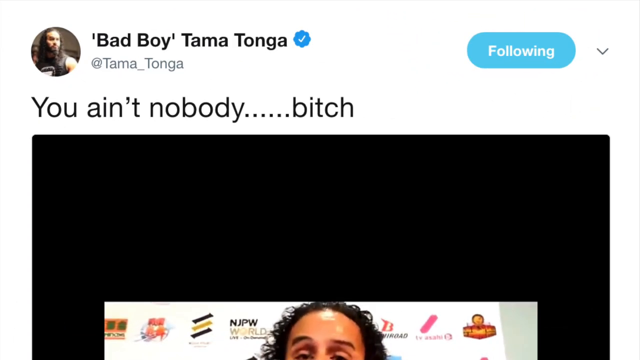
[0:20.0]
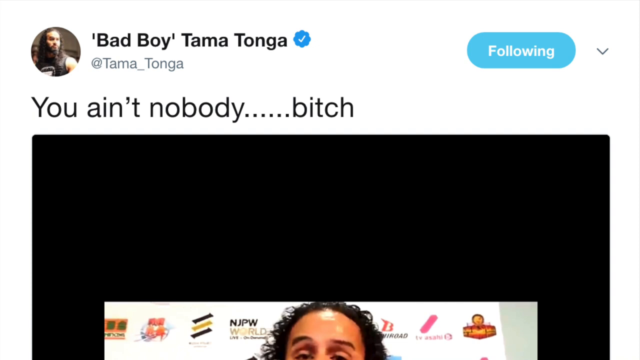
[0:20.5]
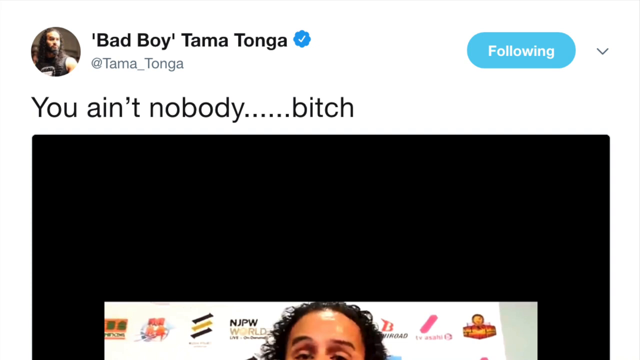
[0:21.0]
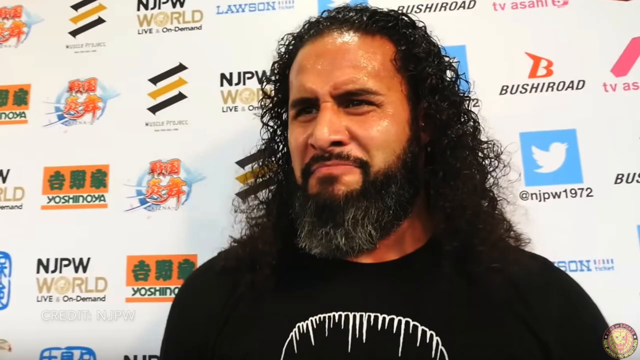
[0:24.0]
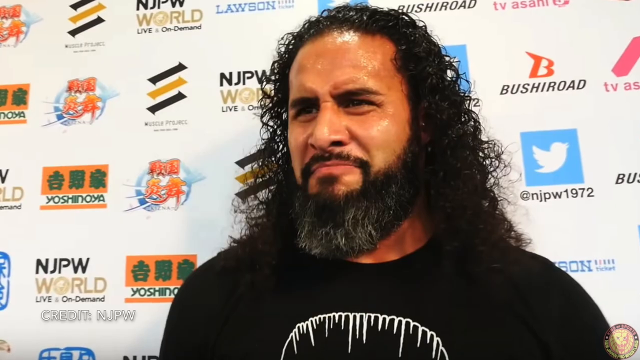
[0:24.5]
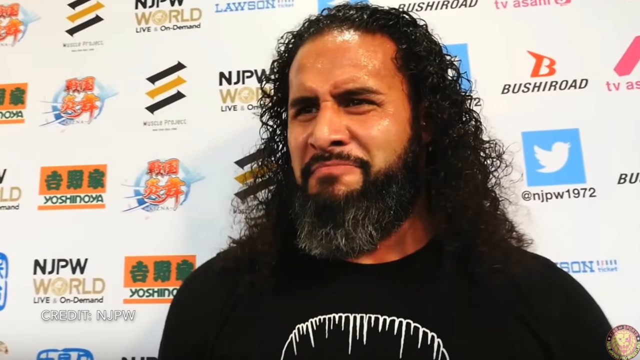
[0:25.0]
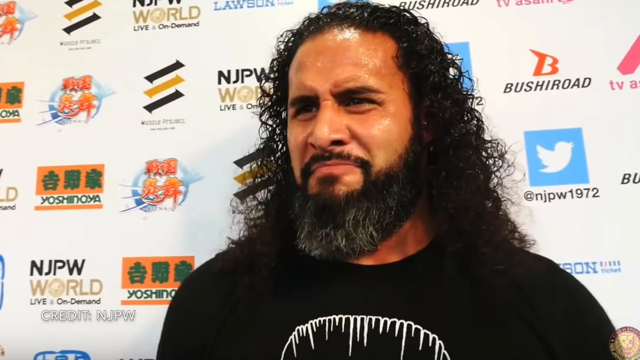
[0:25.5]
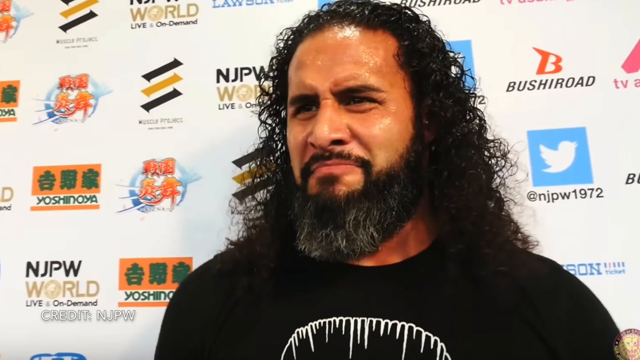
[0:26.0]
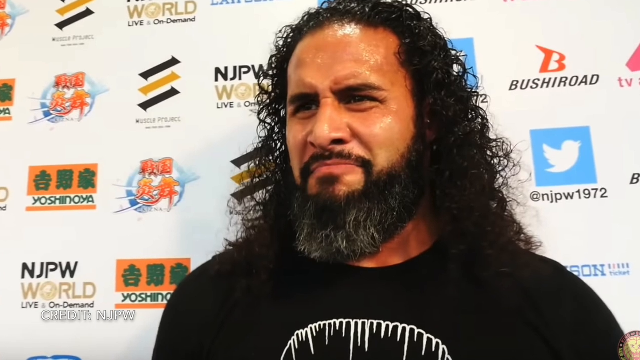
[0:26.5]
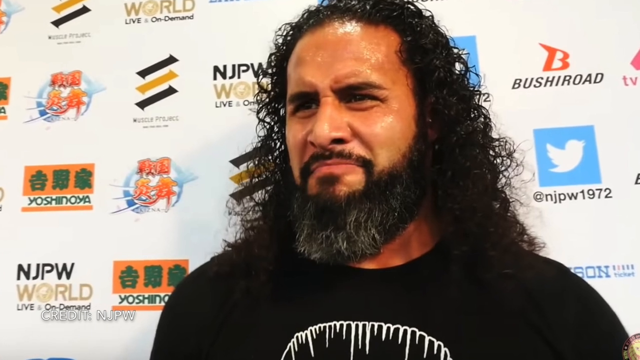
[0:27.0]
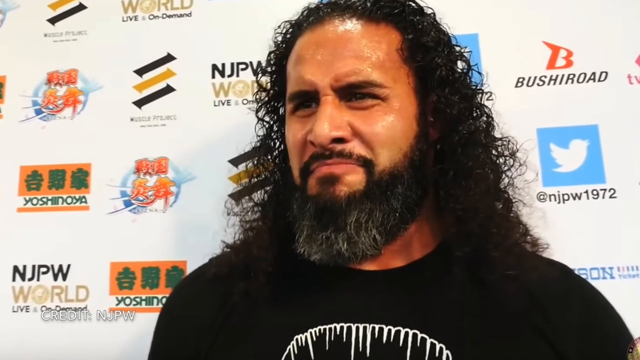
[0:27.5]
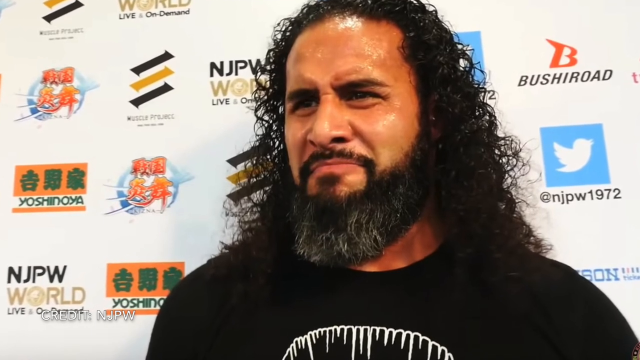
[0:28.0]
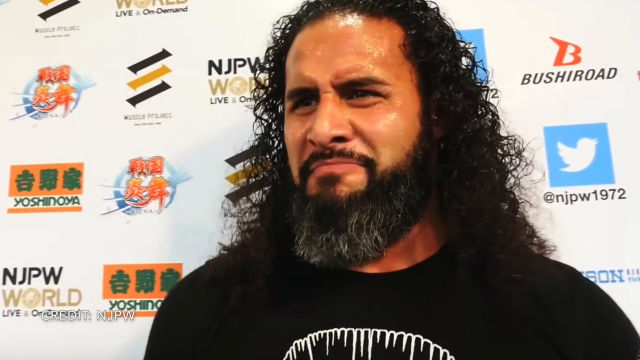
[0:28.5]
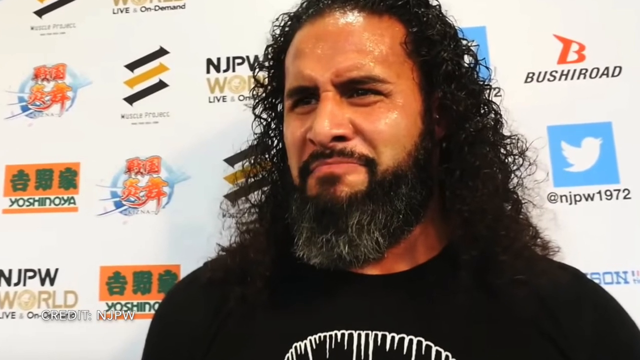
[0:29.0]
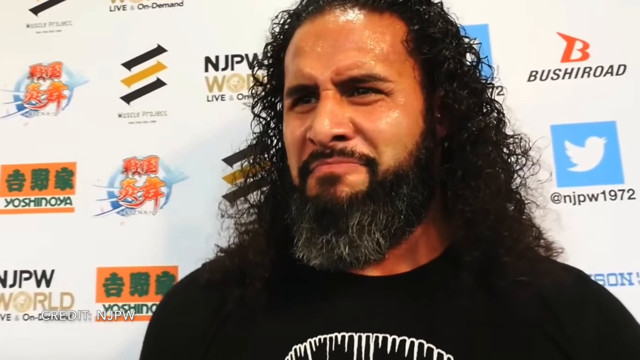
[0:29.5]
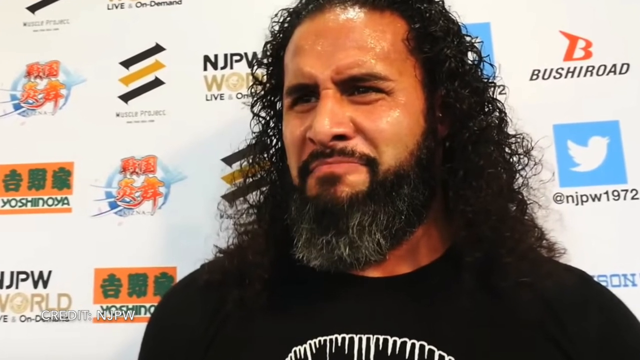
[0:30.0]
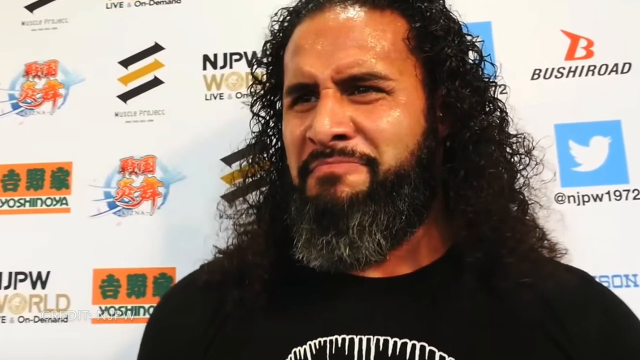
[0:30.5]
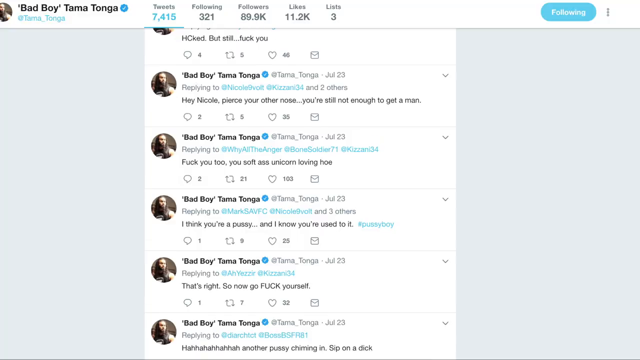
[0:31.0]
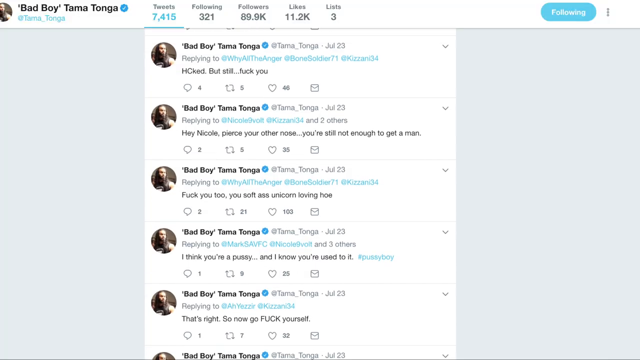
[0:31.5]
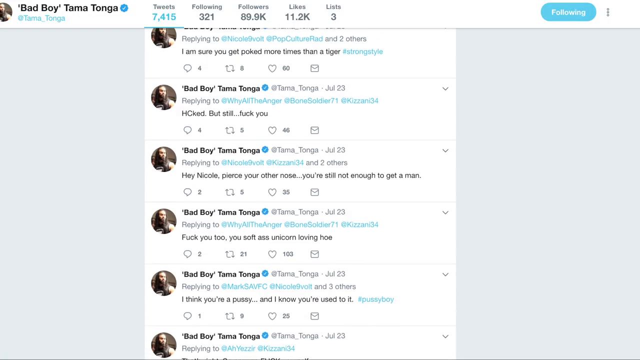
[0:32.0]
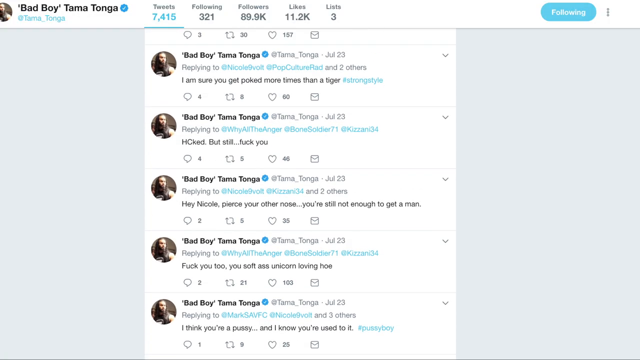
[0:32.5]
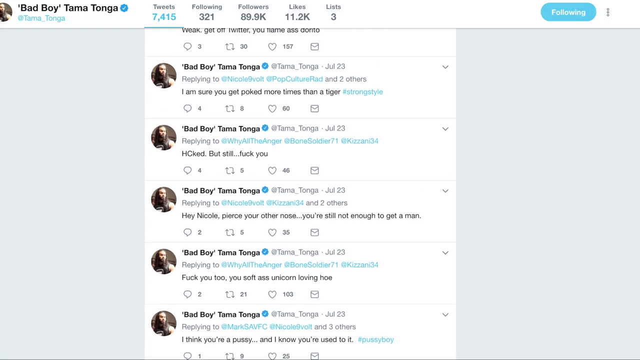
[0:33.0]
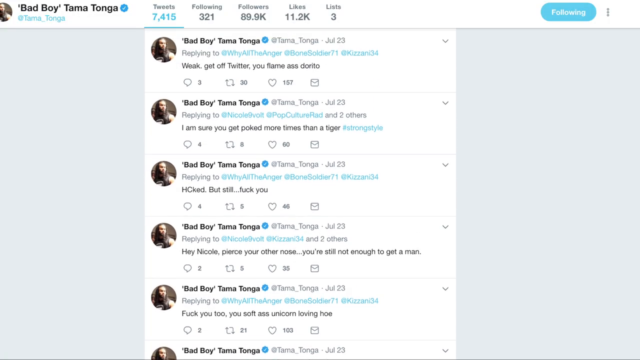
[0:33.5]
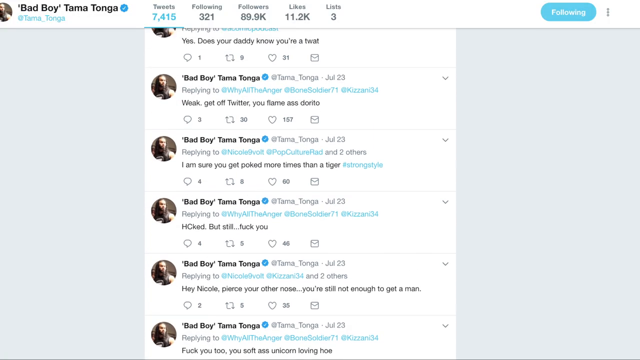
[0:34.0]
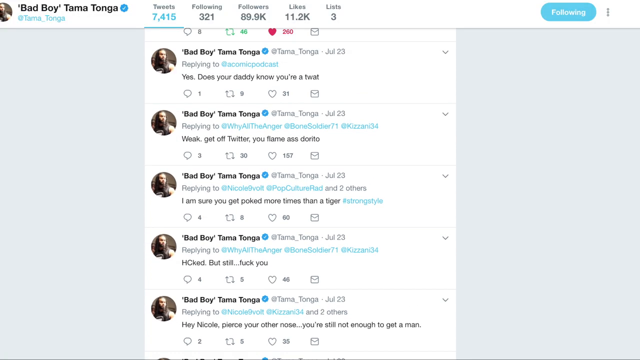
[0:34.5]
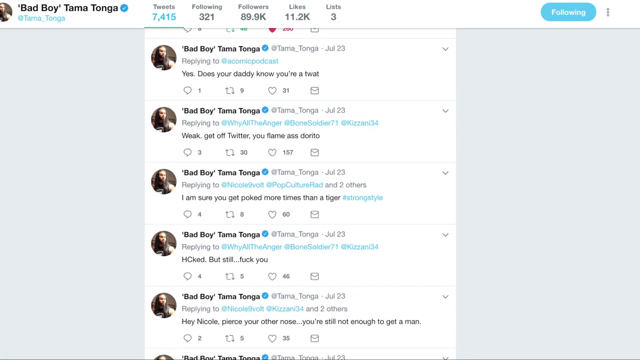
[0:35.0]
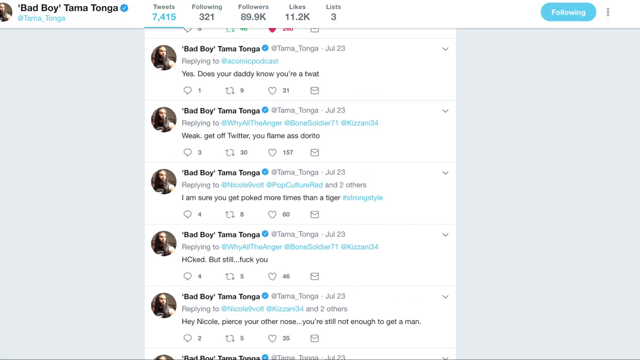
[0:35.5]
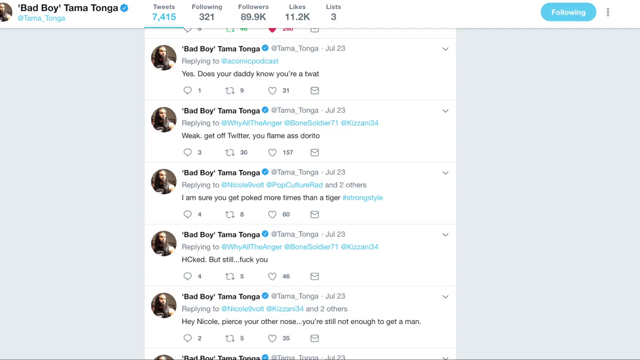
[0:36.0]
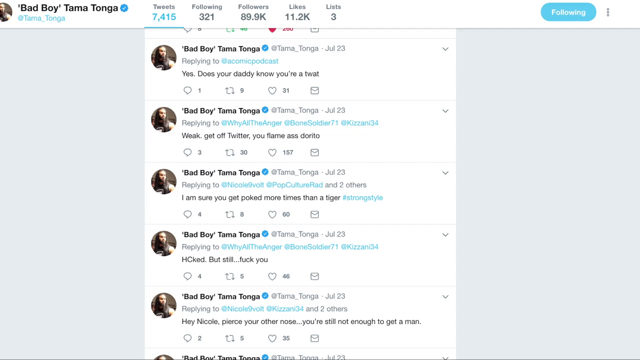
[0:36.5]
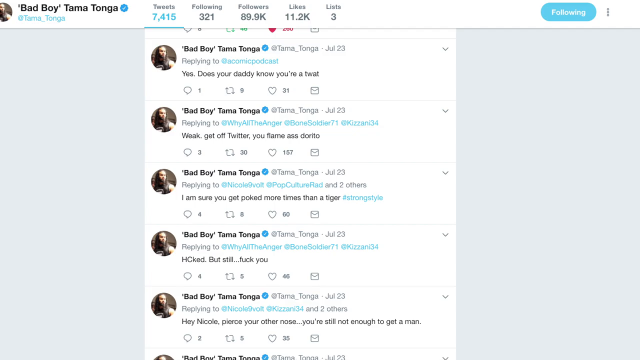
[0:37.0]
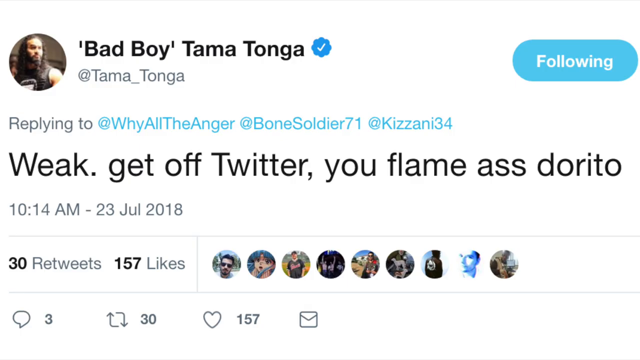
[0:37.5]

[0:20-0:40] A Twitter post shows the name of the person tweeting, "Bad Boy Tama Tonga", in black text with a blue check mark next to it. Underneath, the post says "you ain't nobody", followed by some dots and a bad word, and below that is a cropped picture. The video cuts to another image of what appears to be a wrestler with long black curly hair and a thick black beard that is kind of gray by the chin, wearing a black shirt, with a banner covered in logos behind him; the camera seems to zoom in on his face. Next, what looks like a whole bunch of tweets by the same guy are shown on the screen, and the user seems to scroll up through the posts. The view zooms in on one post, which says in black text "weak, get off Twitter, you flame", followed by a bad word and "Dorito". Underneath, it shows 30 retweets and 157 likes.